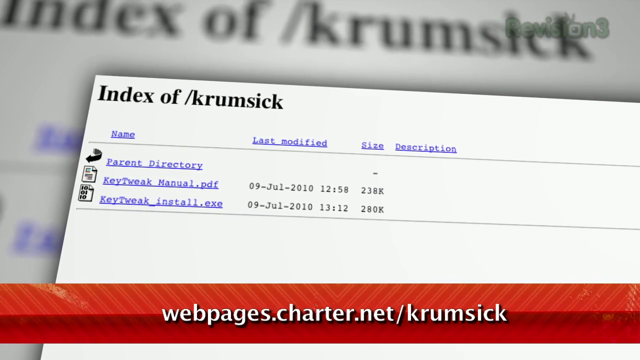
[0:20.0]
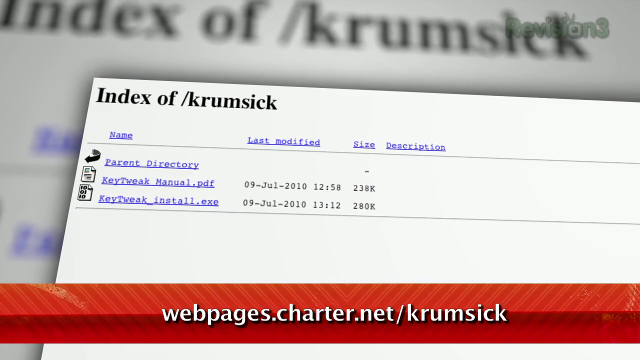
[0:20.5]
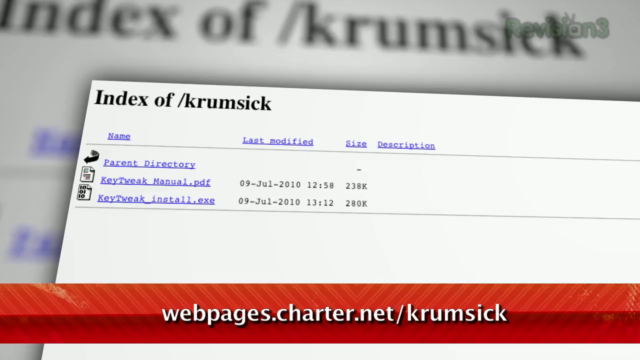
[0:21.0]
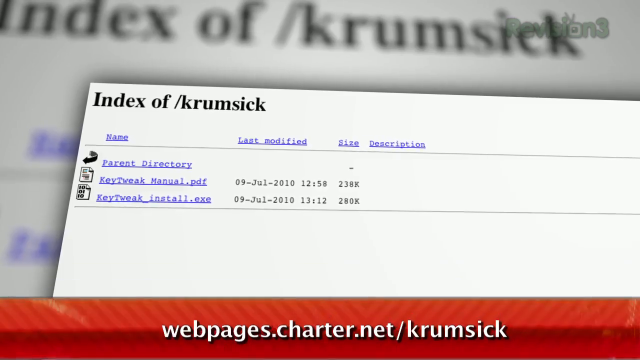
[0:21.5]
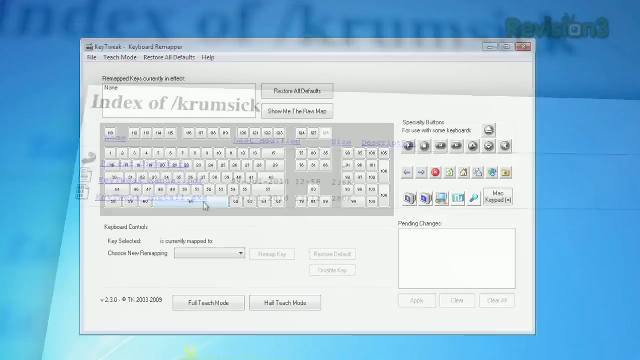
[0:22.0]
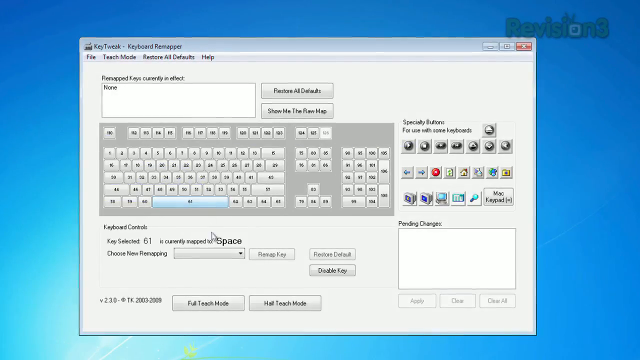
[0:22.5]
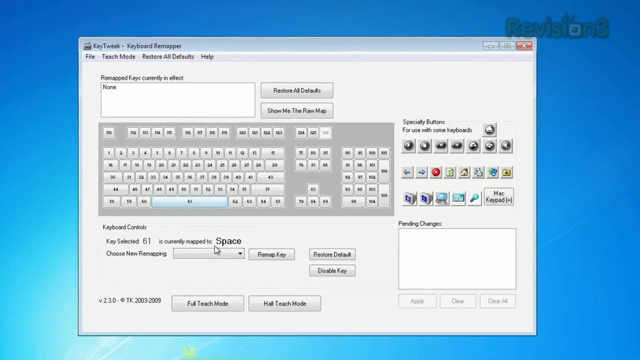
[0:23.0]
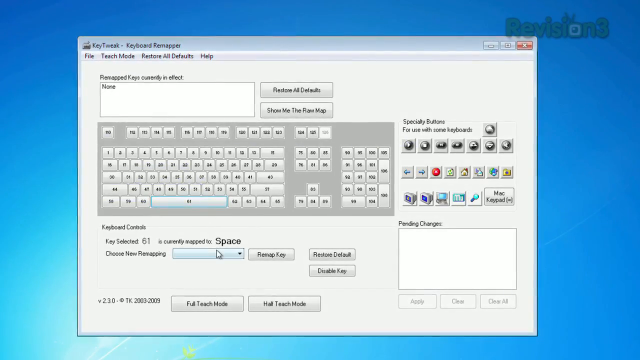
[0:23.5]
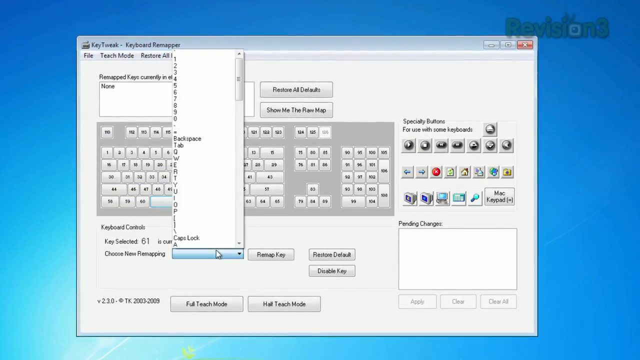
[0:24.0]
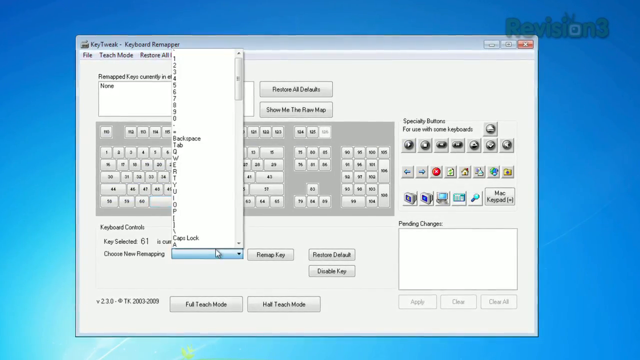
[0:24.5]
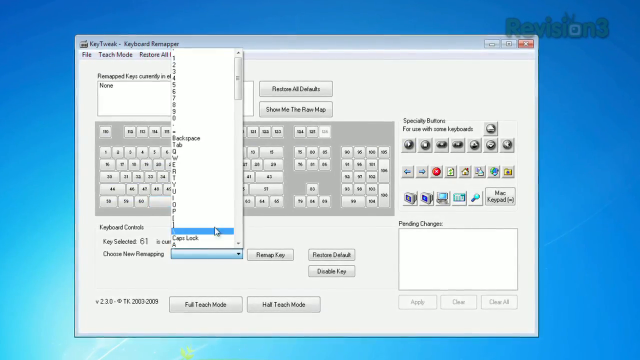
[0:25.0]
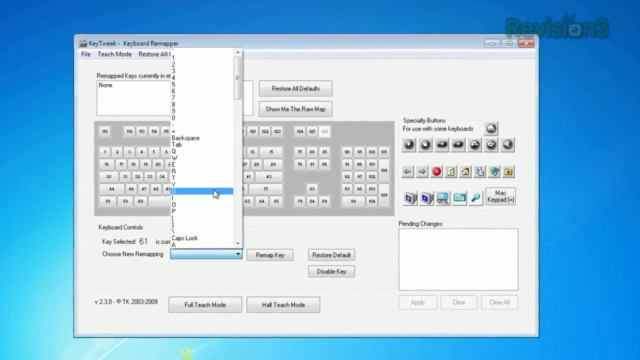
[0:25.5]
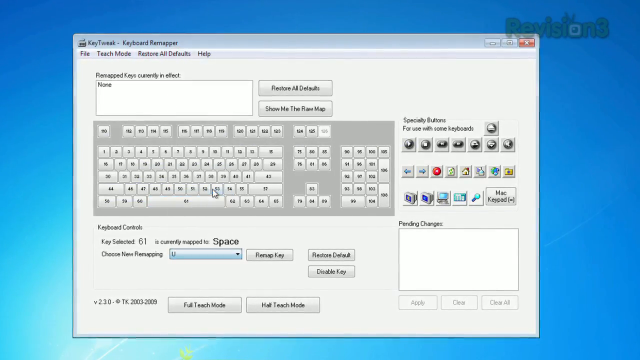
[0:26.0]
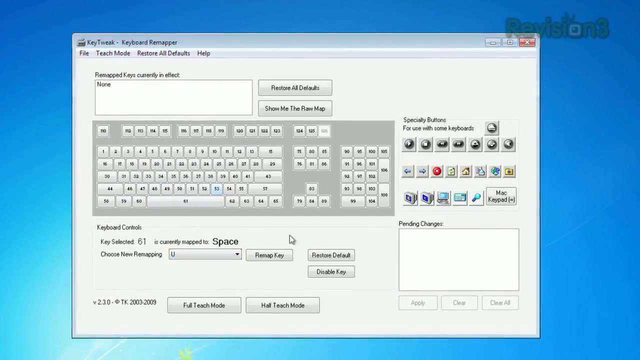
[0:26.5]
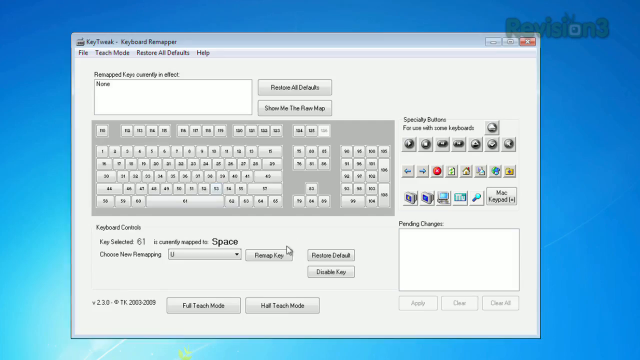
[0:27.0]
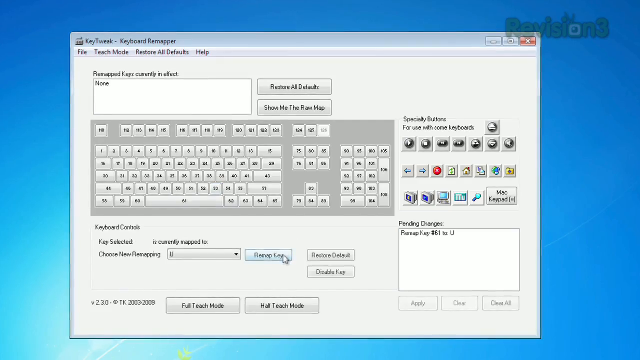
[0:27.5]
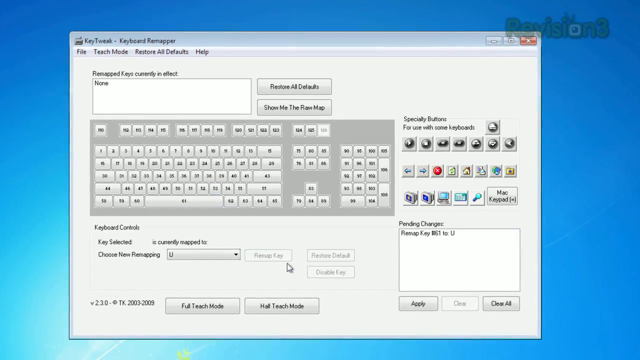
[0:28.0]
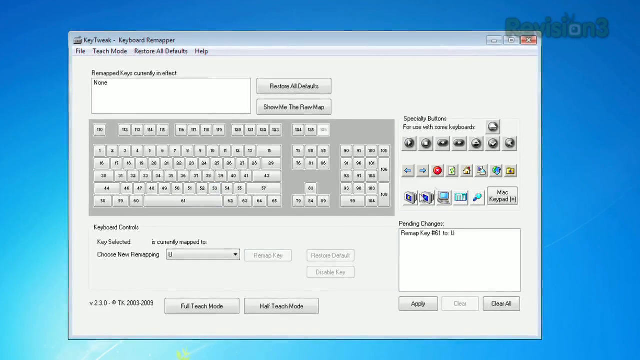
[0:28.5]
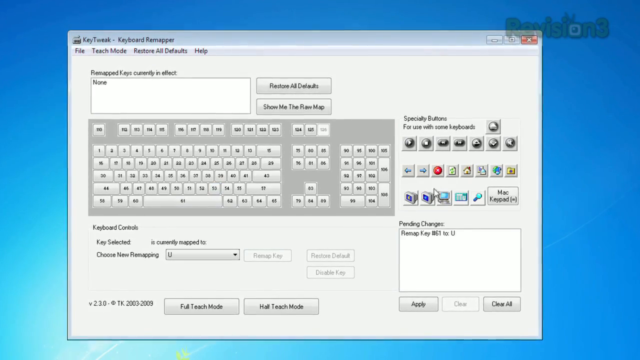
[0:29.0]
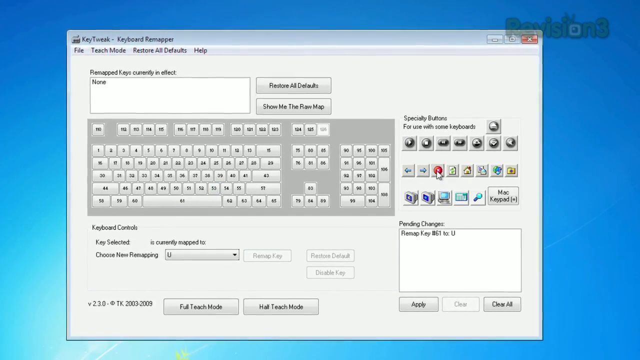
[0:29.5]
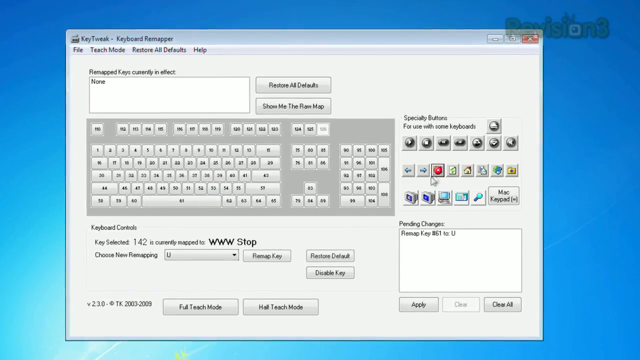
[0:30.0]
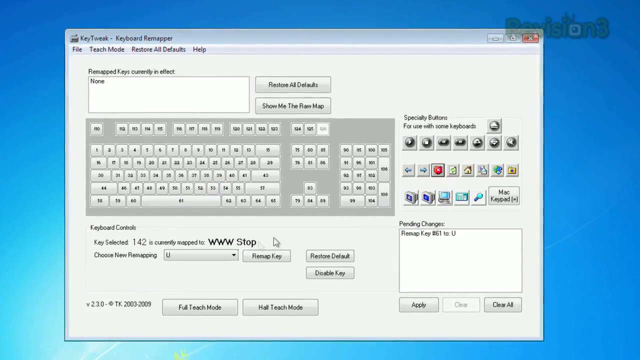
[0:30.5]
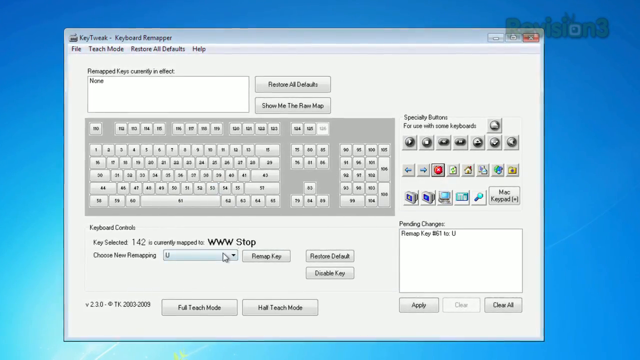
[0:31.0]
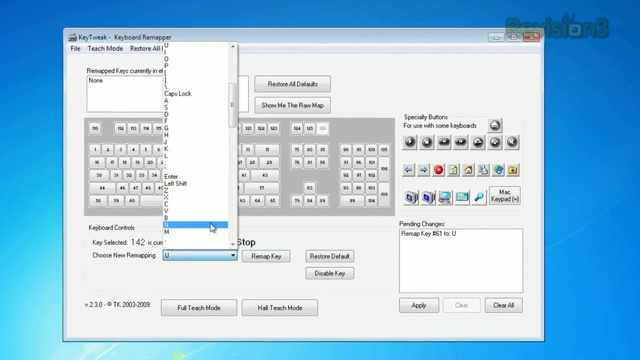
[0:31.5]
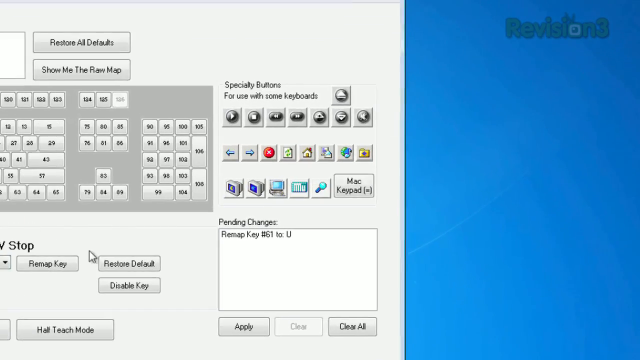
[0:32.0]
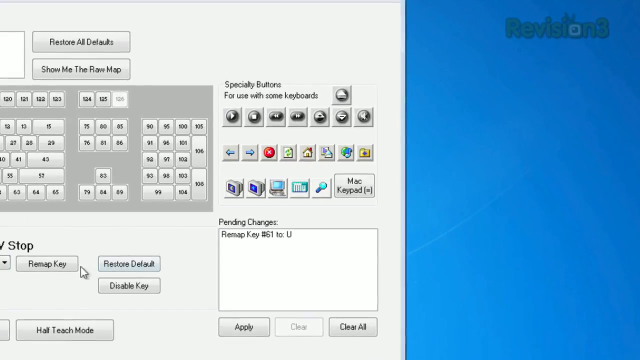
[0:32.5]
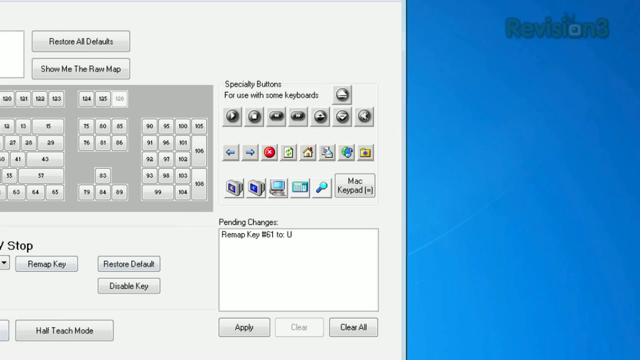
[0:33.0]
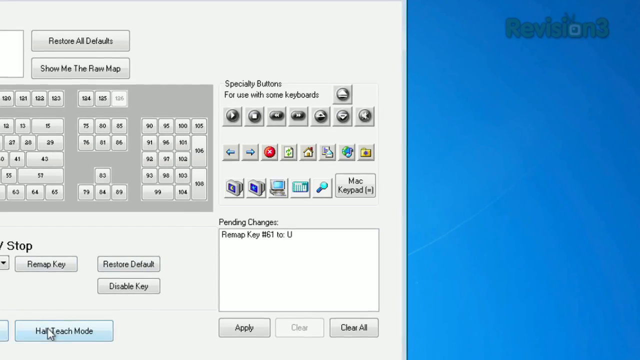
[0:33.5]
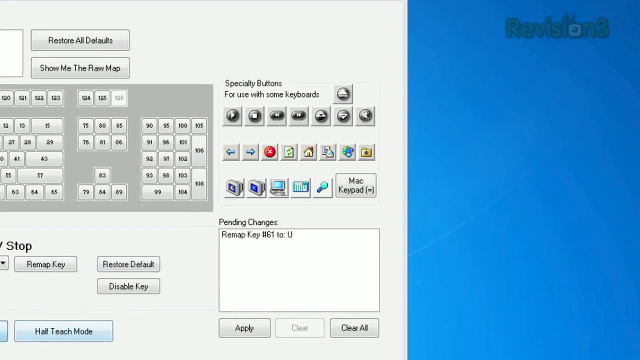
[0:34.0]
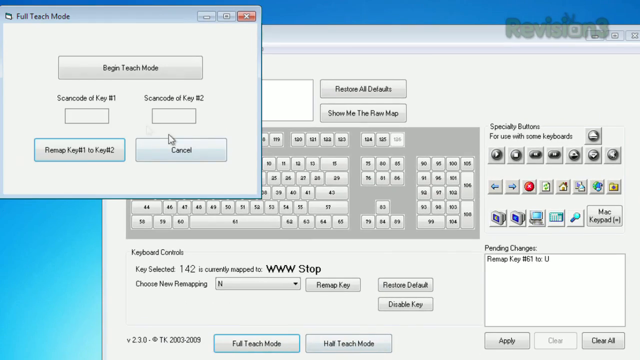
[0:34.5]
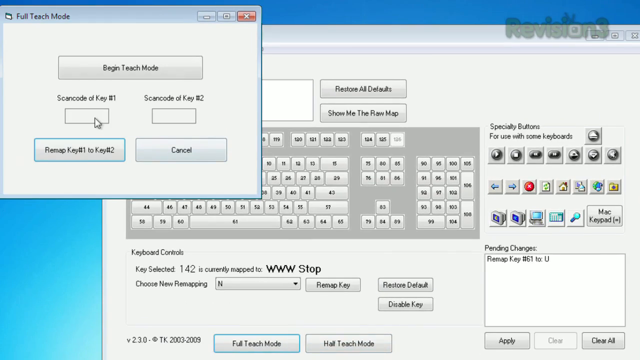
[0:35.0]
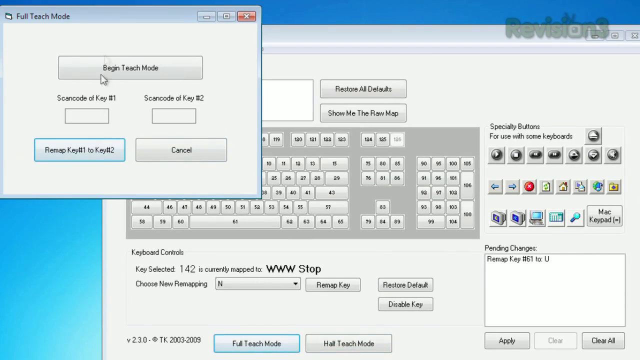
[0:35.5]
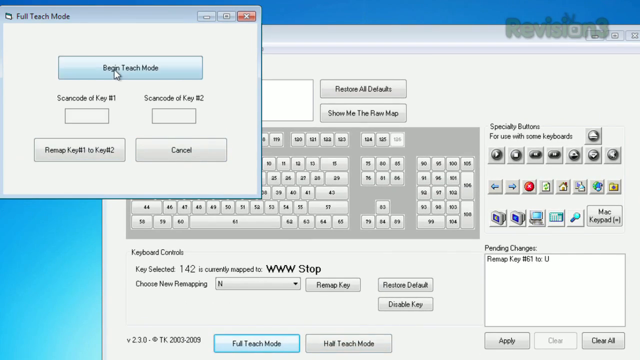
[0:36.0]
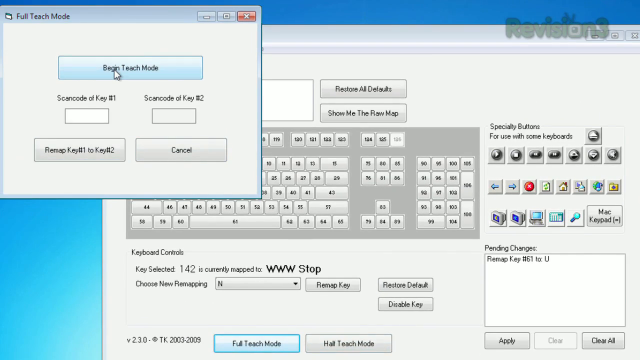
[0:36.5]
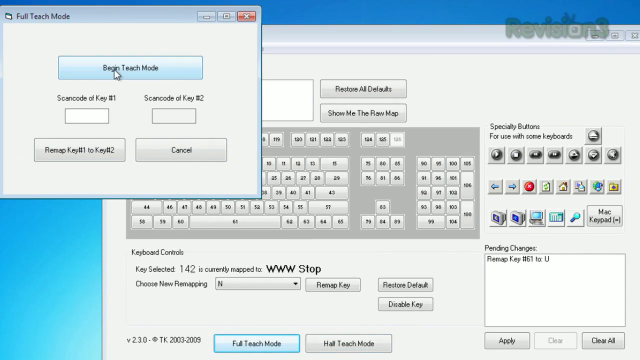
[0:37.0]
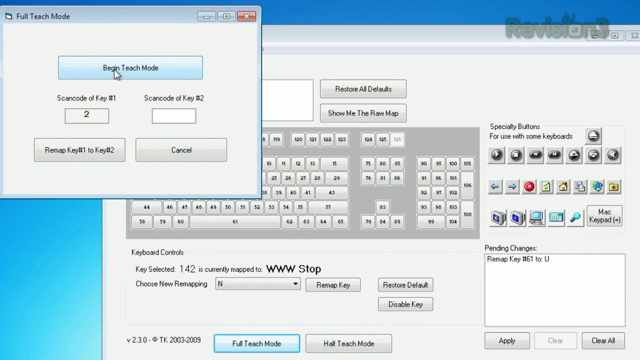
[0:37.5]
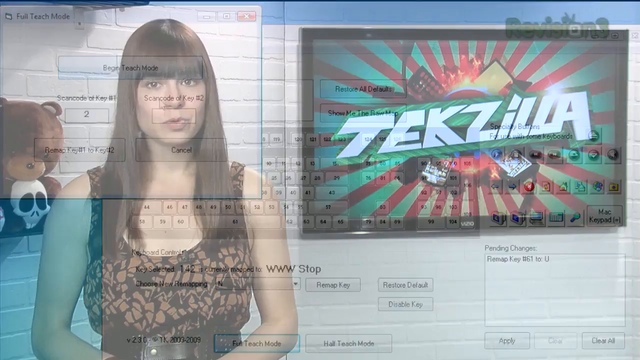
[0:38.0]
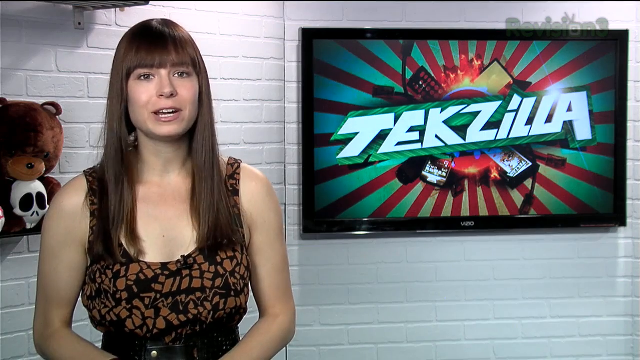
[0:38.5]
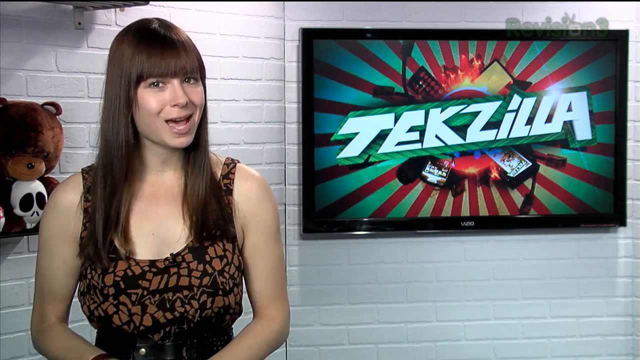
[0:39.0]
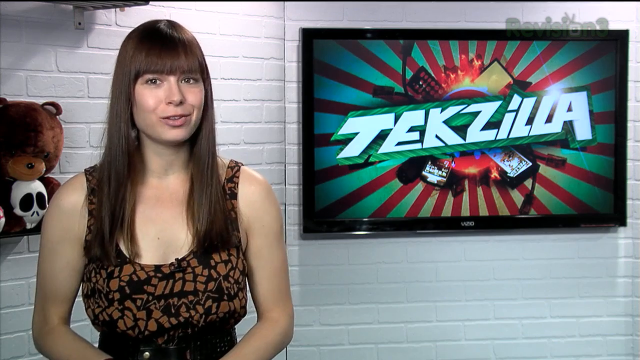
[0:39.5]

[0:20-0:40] An image of paper shows the words "index of /krumsick" in the upper left-hand corner. Underneath are the headings "name" (underlined), then to the right "last modified", to the right of that "size", and to the right of that "description". Under "name" is "parent directory", underlined. Below it is "key tweak manual.pdf 09-Jul-2010 12:58 238k", and below that "key tweak-install.exe 09-Jul-2010 13:12 280k". The bottom of the screen says "webpages.charter.net/Krumsick". The video then transitions to a computer screen showing file check mode, with a keyboard in the center of the screen and options for reset all defaults. A mouse clicker is under the workspace. In the upper left-hand corner, a box reading "full tech mode, begin tech mode" appears. The mouse clicker goes to the scan code of key number one, clicks begin tech mode, and places two in the space. The video then transitions back to the female speaker with Tekzilla in the background.